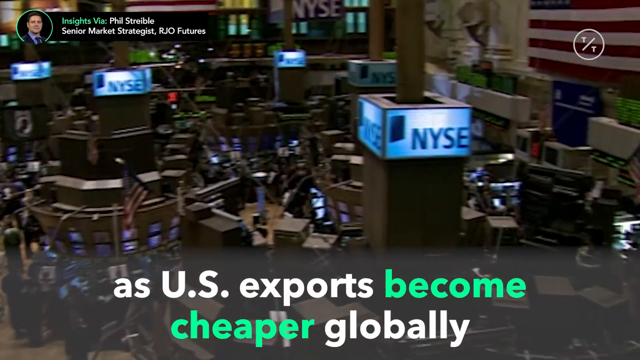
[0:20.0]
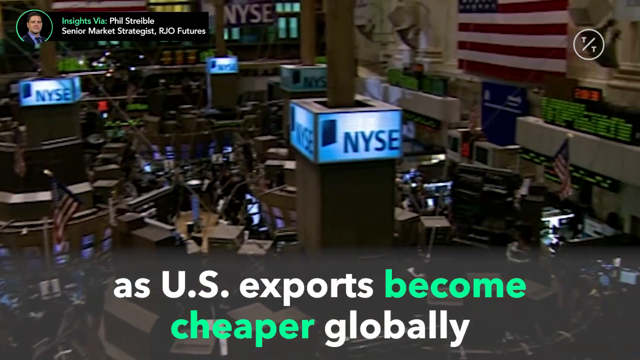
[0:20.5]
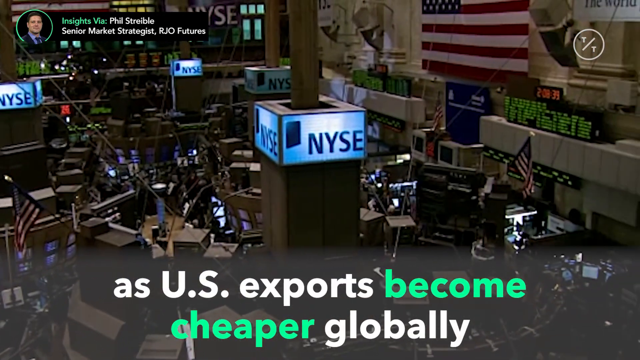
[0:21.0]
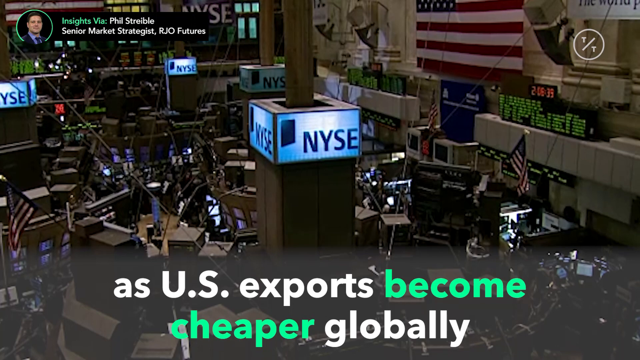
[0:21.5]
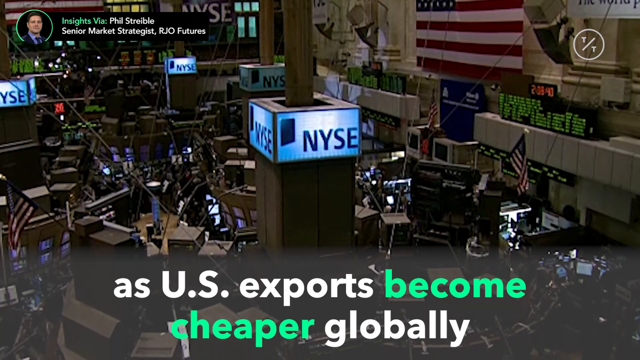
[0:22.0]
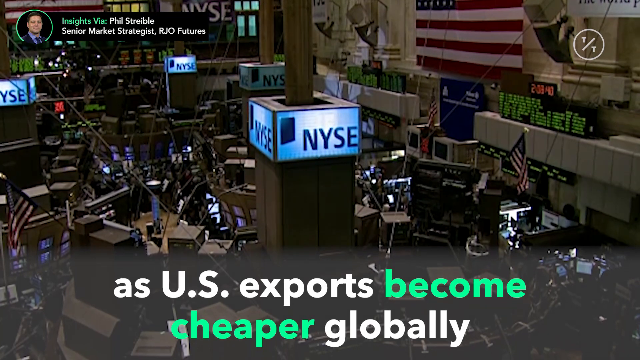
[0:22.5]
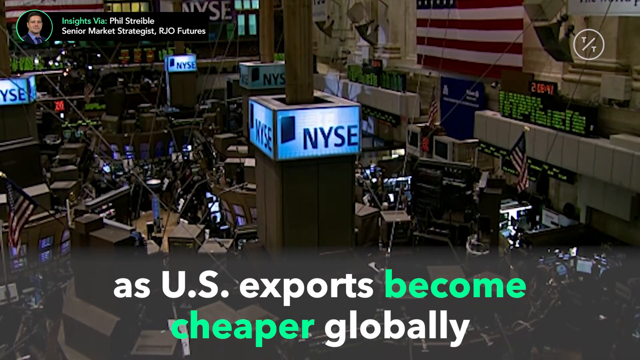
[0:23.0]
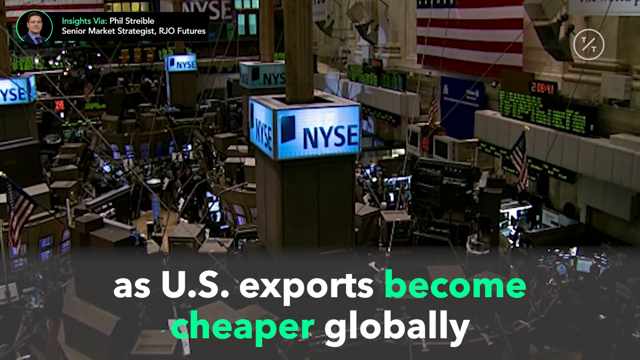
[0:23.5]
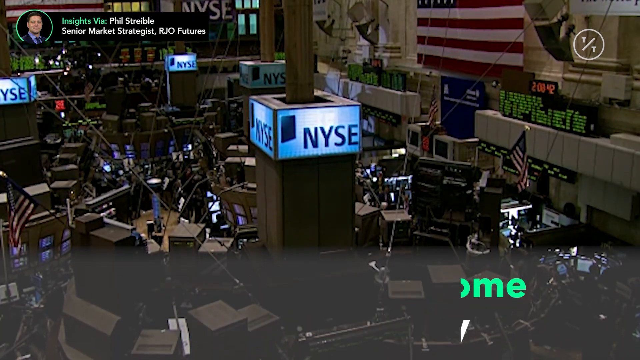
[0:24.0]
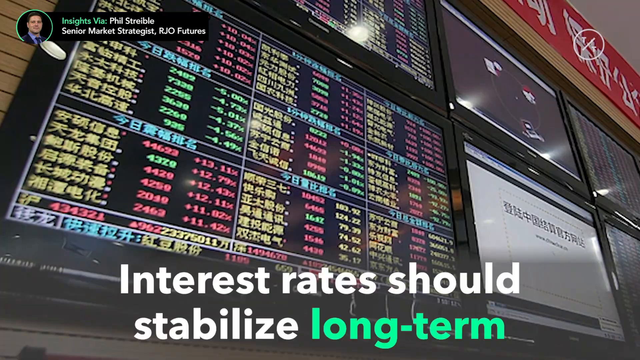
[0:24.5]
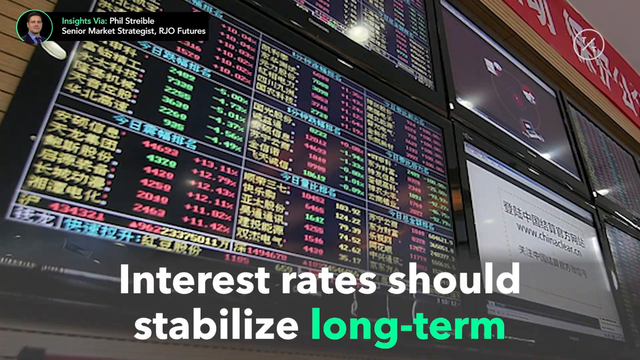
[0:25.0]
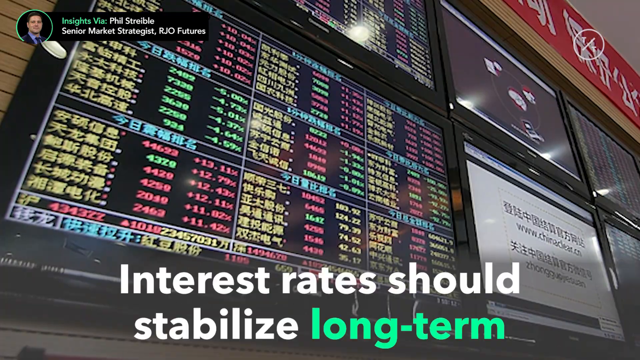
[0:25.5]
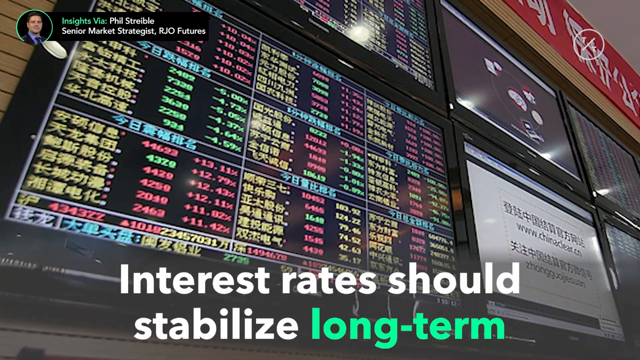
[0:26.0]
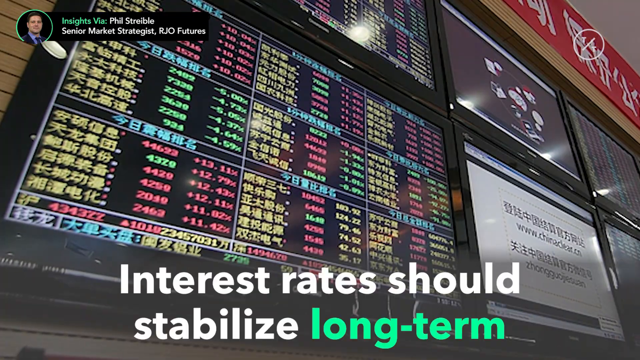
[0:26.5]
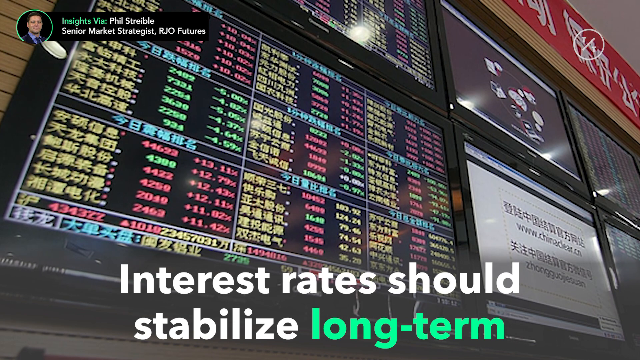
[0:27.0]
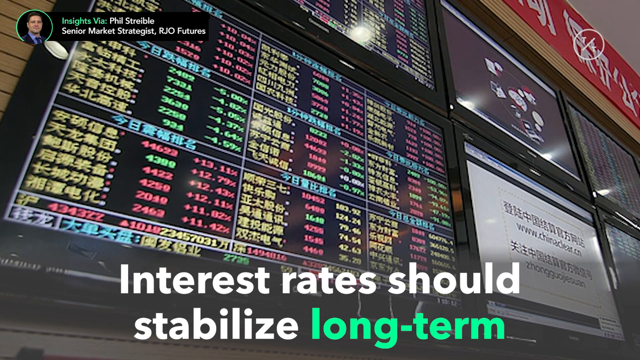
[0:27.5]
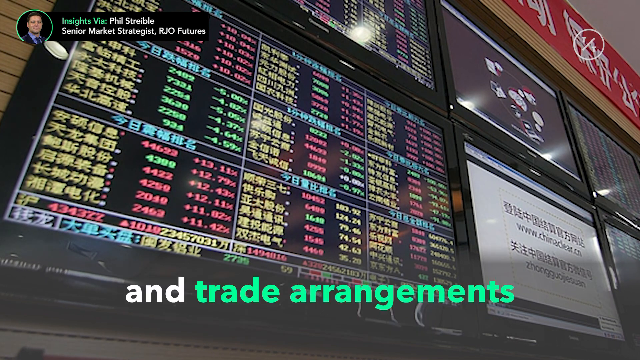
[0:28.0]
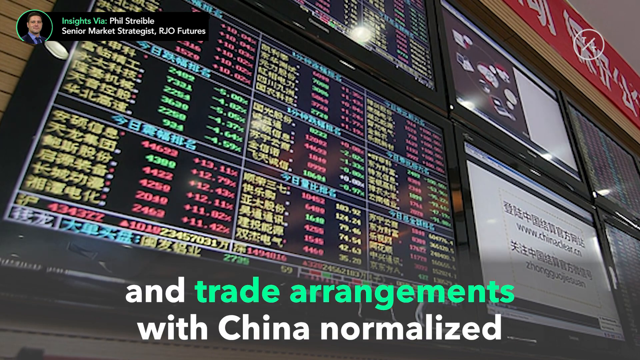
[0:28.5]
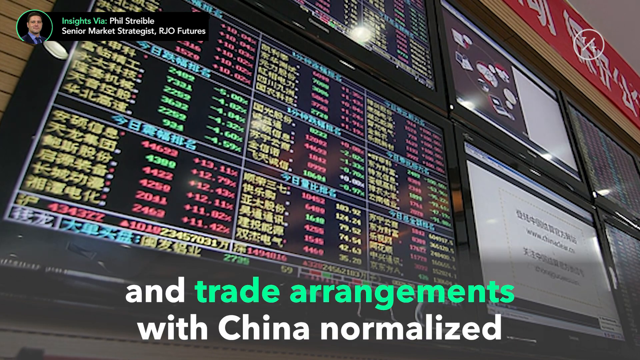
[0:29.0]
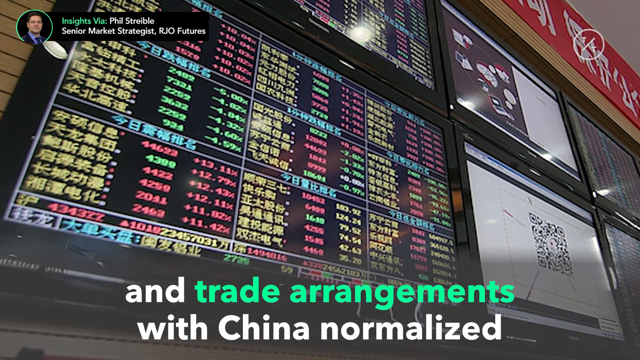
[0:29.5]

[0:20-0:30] A pillar reads "NYSE," and text below it says "as US exports become cheaper globally, interest rates should stabilize long term." Trading data charts outlined in black appear next to each other, and on the right is a white screen with black Asian text. The text at the bottom keeps changing and is half green and half white; the new text reads "and trade arrangements with China normalized."